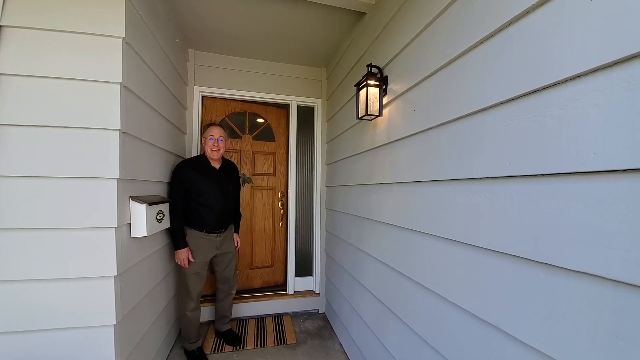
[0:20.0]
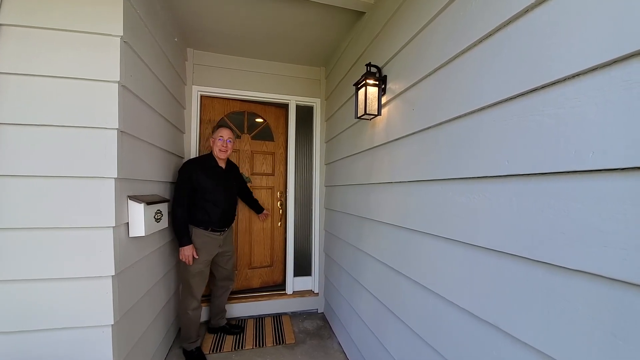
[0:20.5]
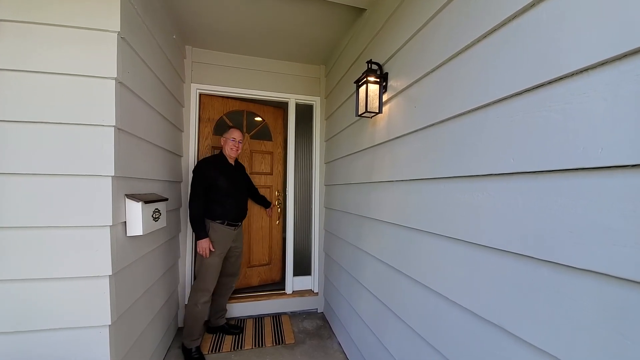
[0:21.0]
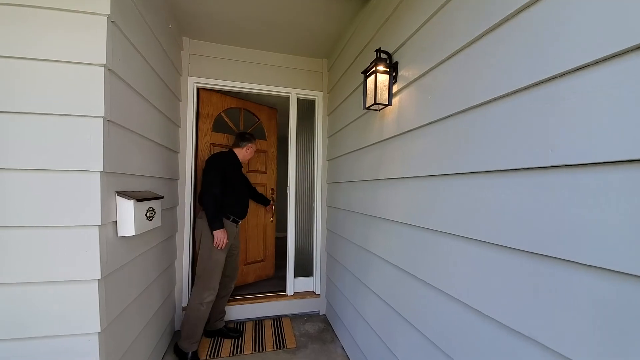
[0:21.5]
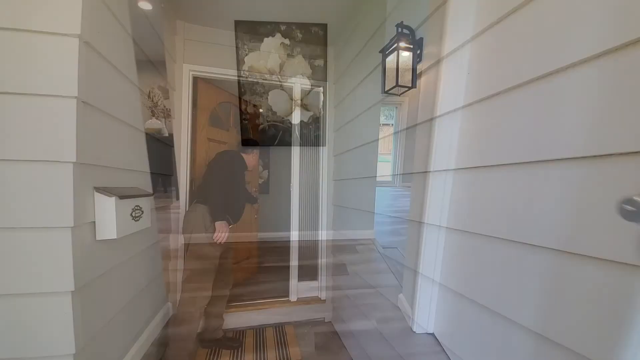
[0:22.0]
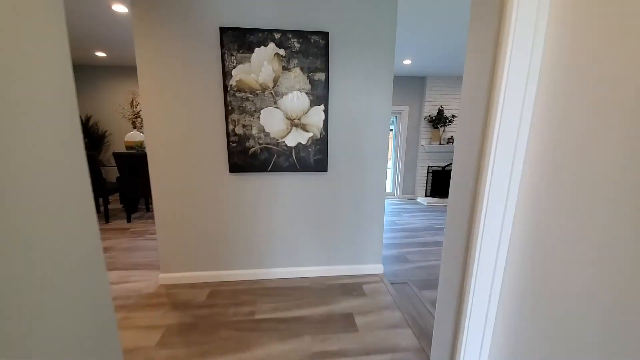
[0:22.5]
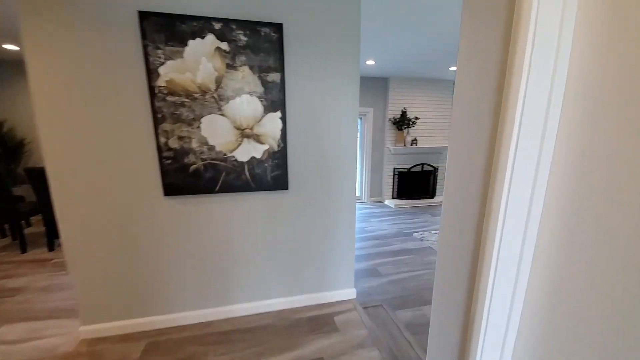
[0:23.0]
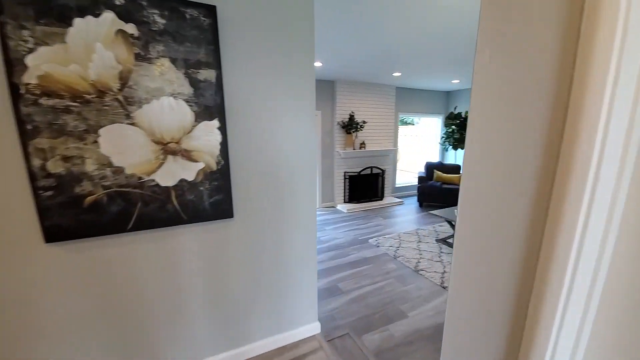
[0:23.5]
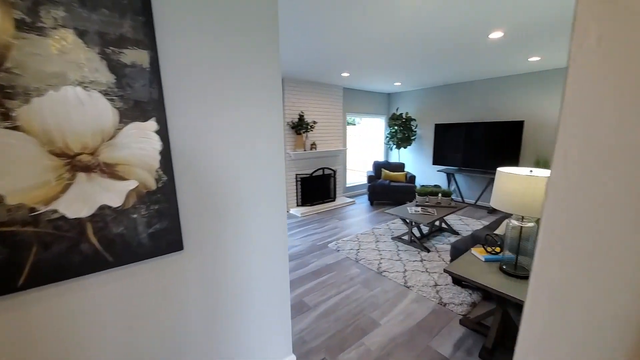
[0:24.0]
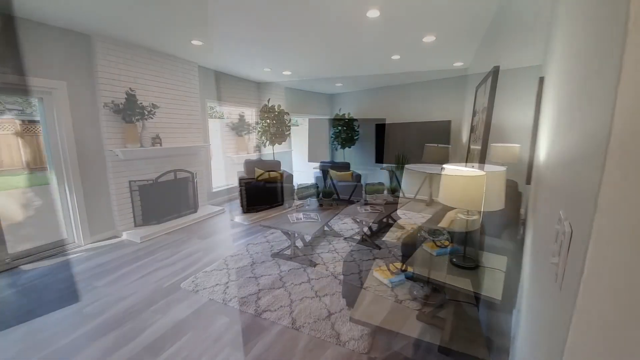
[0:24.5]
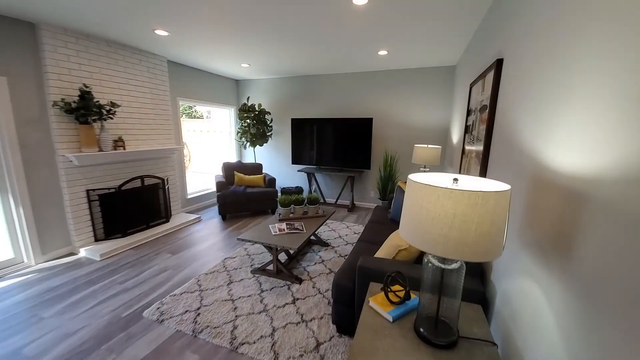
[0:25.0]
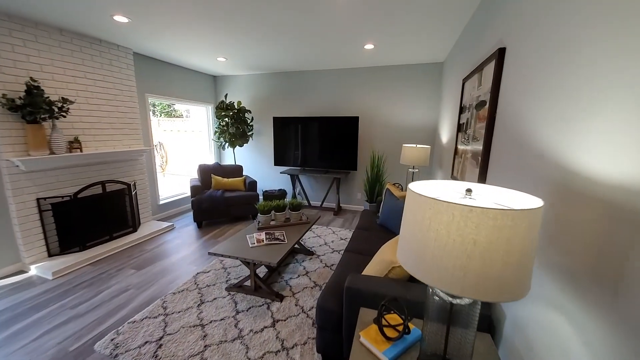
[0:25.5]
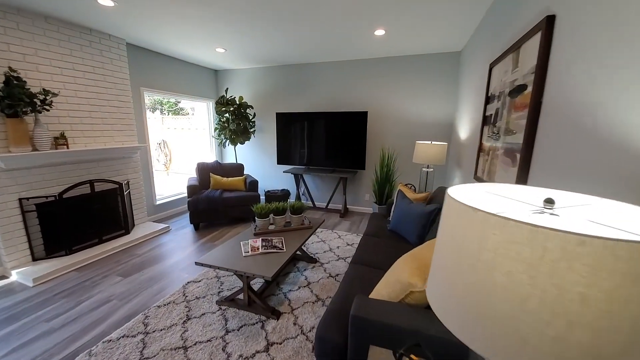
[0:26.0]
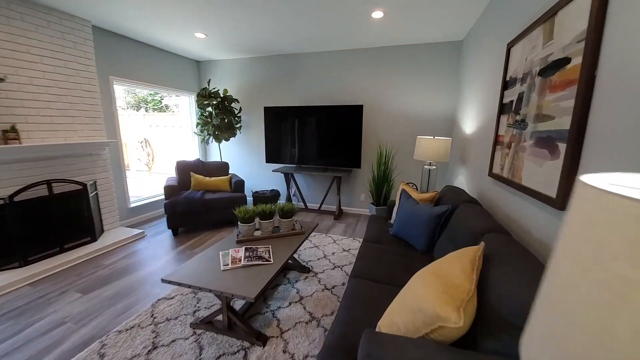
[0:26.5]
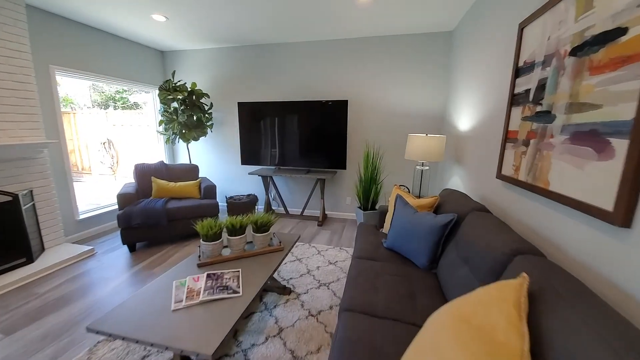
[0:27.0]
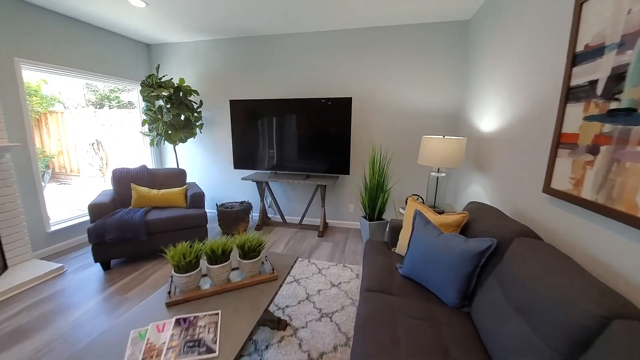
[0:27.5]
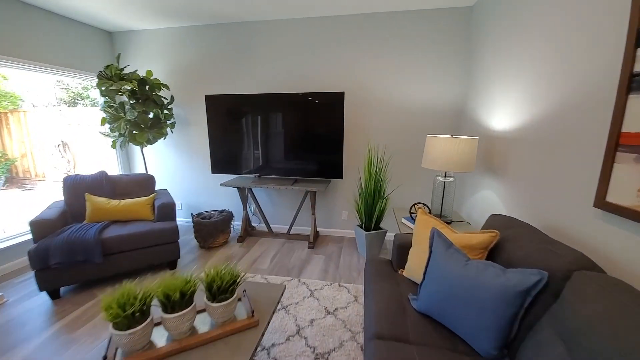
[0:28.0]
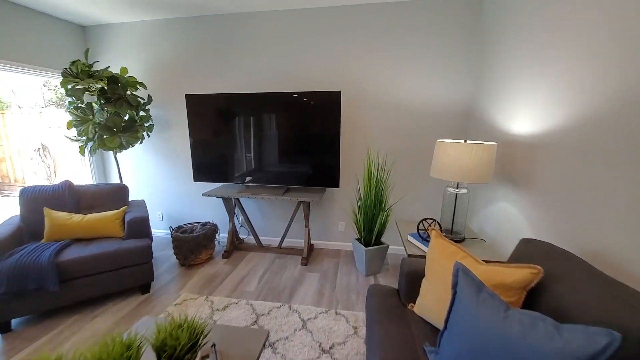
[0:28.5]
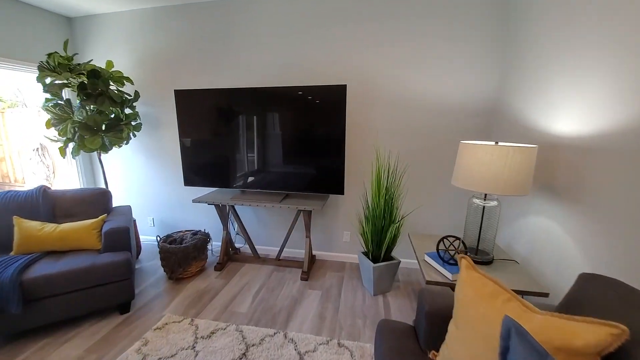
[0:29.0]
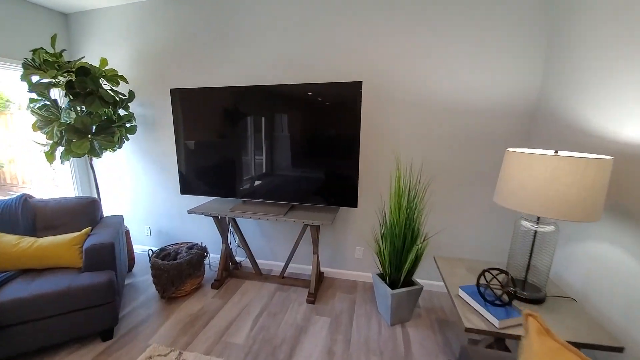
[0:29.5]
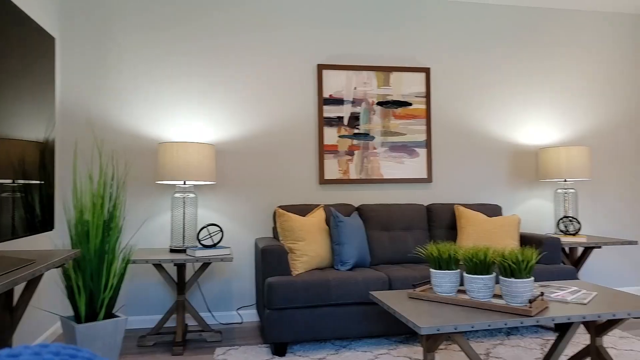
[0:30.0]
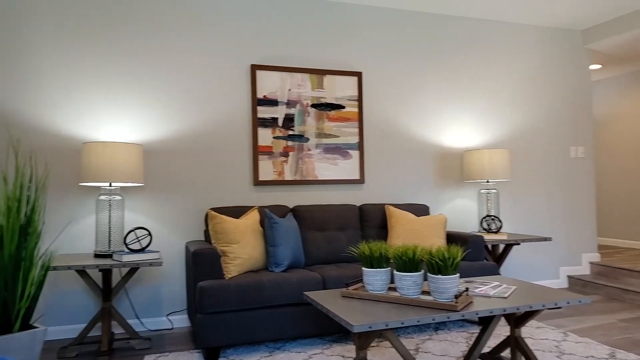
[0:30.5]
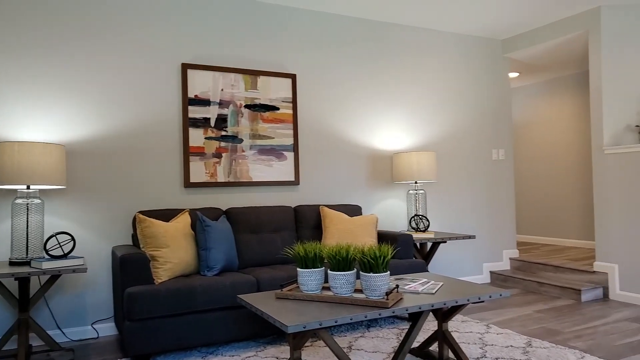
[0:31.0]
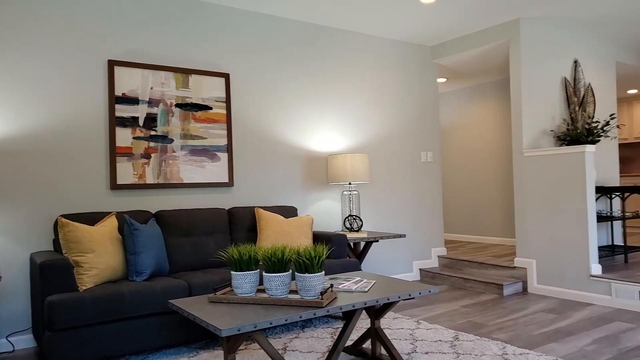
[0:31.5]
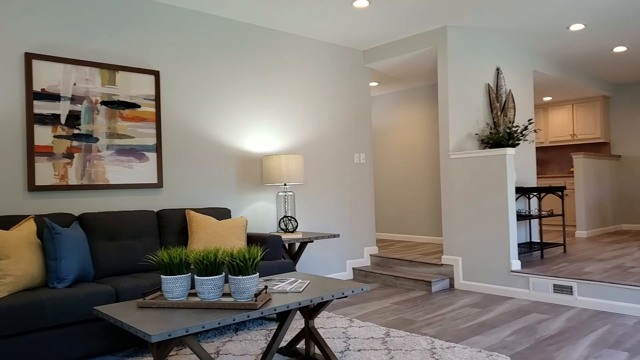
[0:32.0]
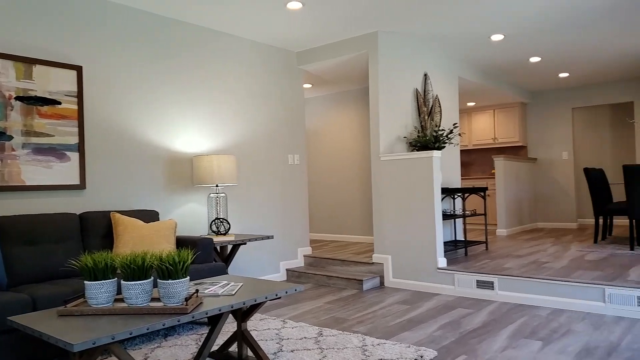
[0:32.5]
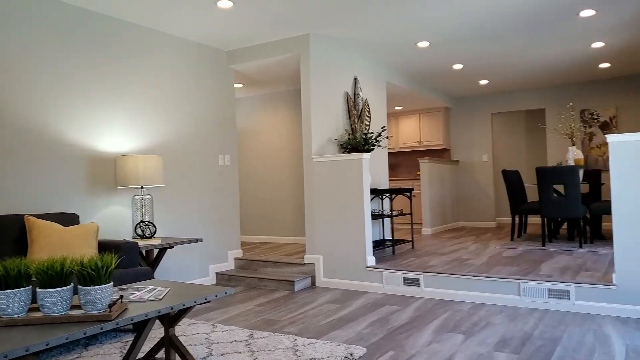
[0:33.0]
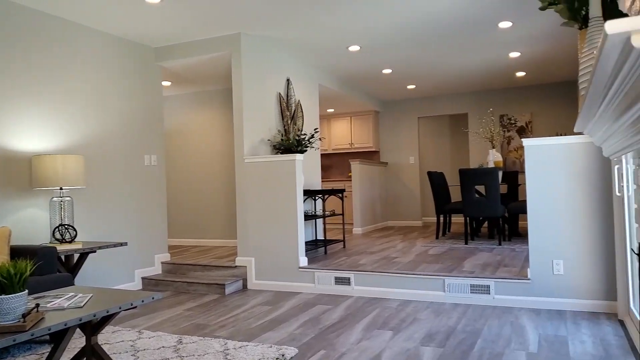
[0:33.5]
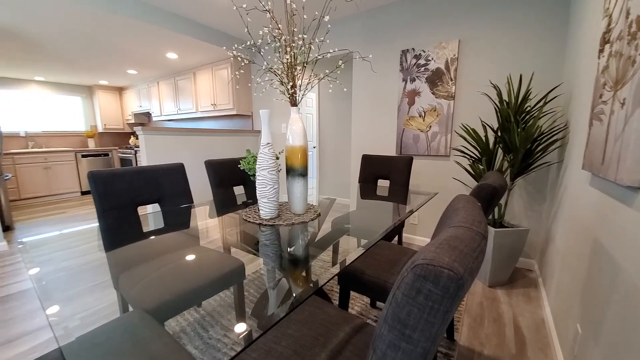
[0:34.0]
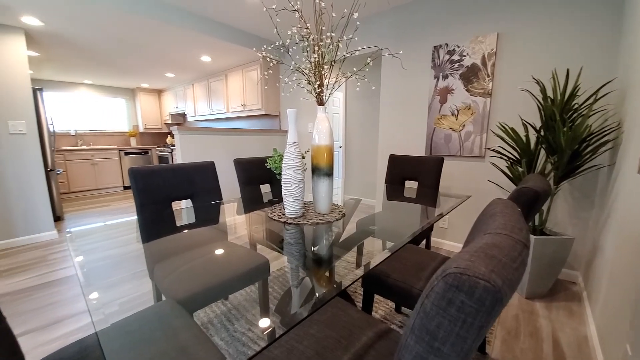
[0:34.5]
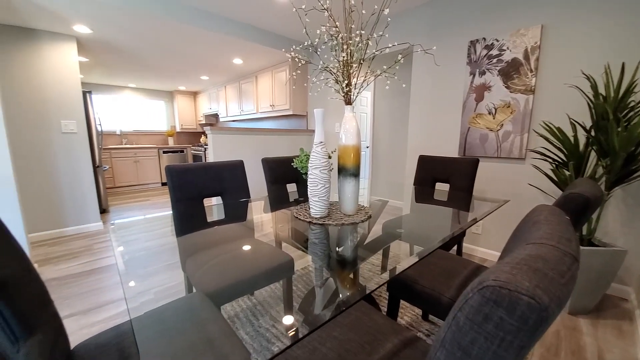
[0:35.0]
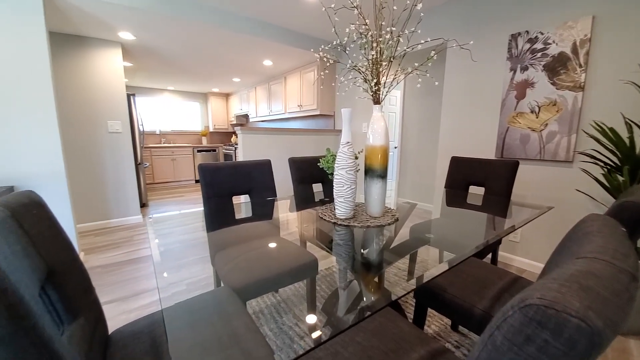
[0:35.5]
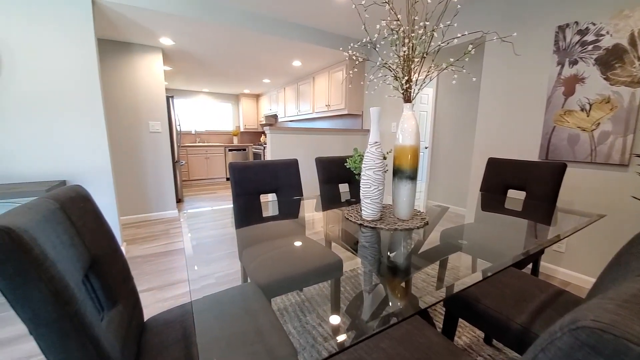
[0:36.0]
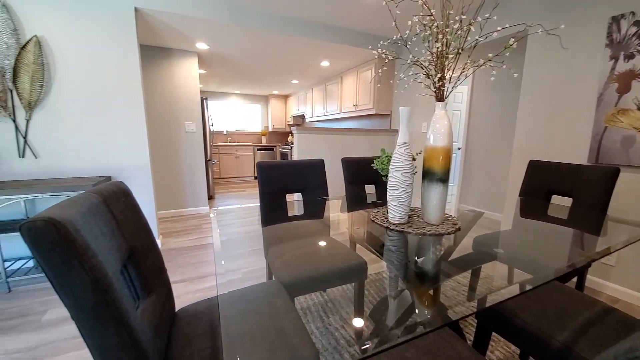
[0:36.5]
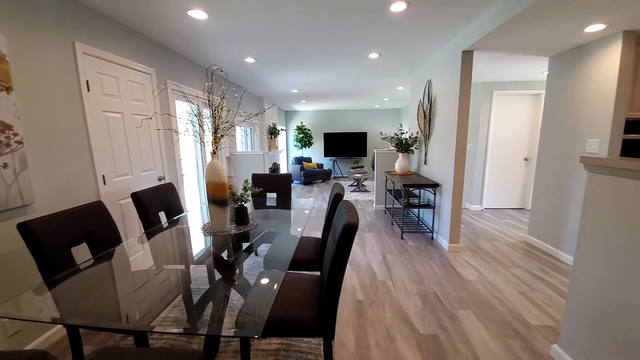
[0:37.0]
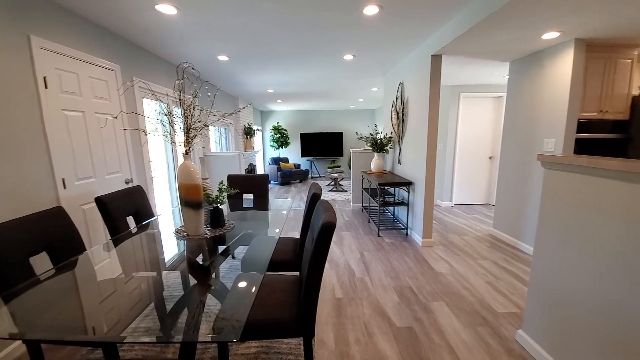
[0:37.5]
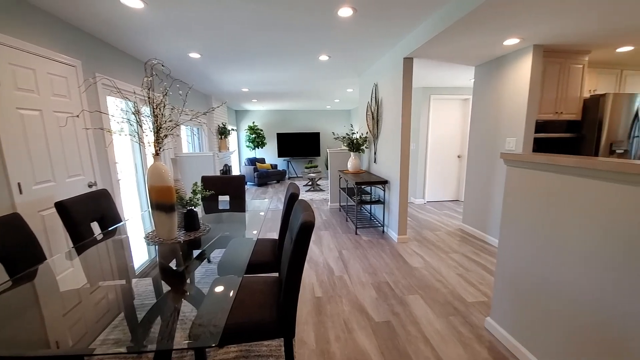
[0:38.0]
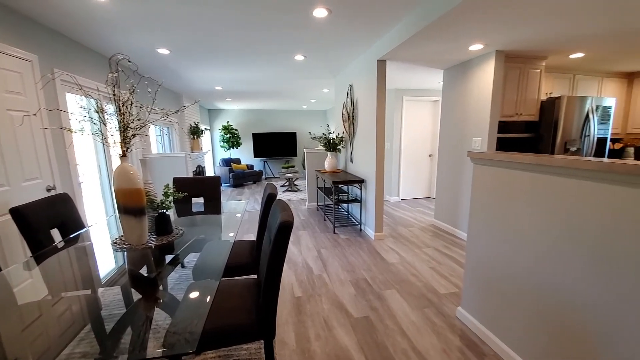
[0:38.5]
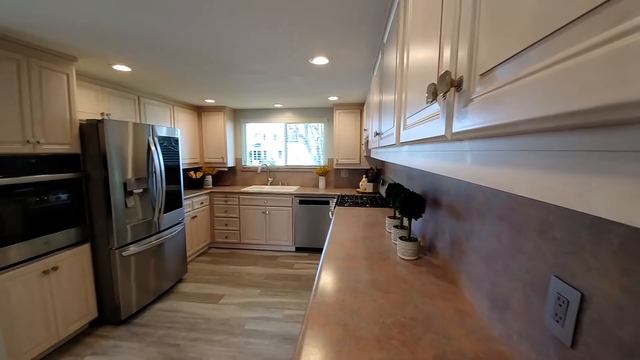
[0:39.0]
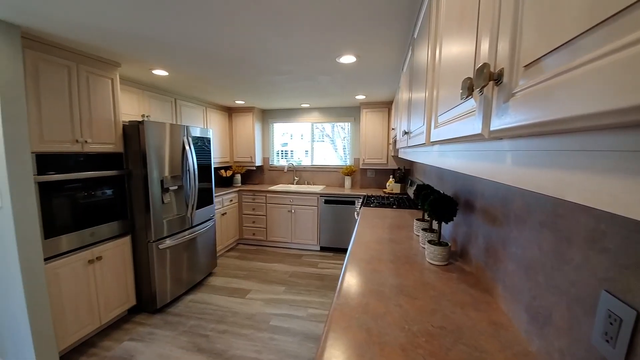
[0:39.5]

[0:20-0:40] The realtor stands in front of the door, opens the front door, and the video segues into a view of the interior. The interior is remodeled and completely staged with furniture and decorative items. The flooring is not hardwood; it appears to be some sort of laminate.